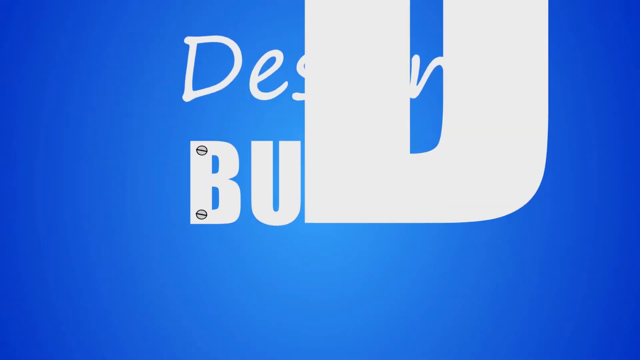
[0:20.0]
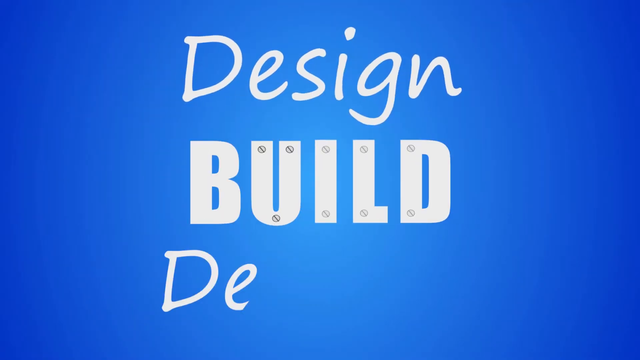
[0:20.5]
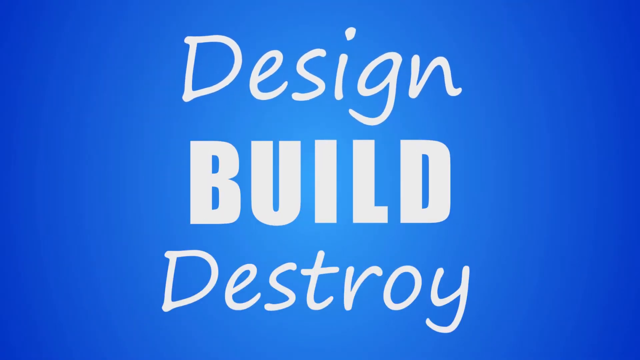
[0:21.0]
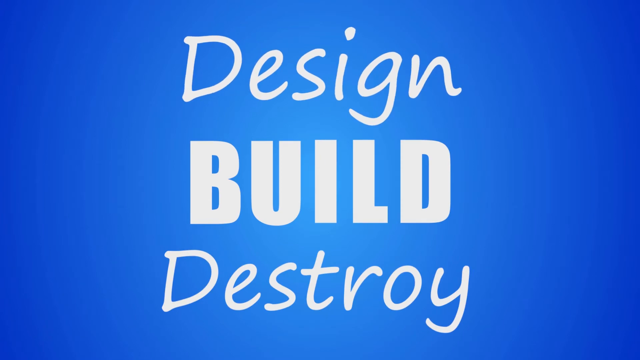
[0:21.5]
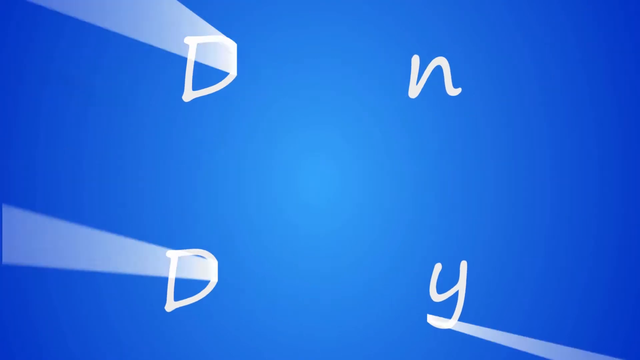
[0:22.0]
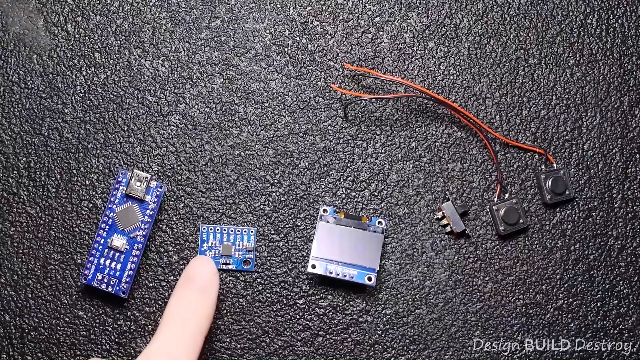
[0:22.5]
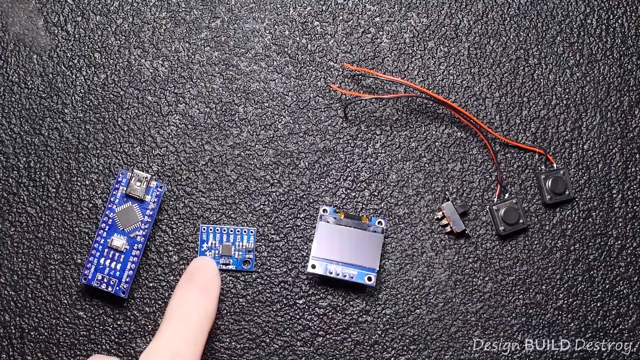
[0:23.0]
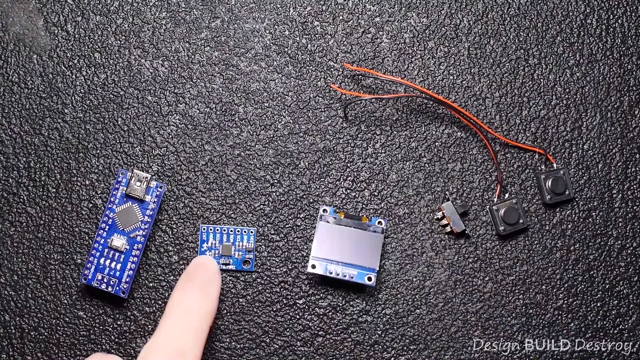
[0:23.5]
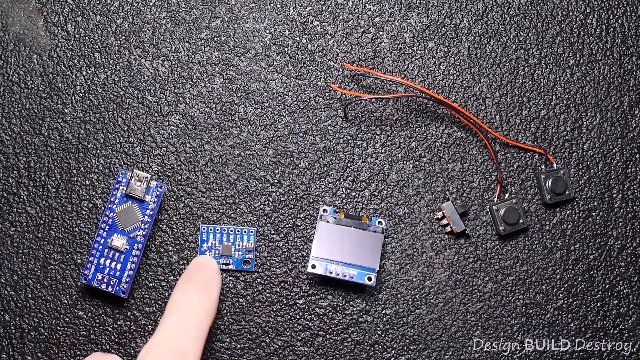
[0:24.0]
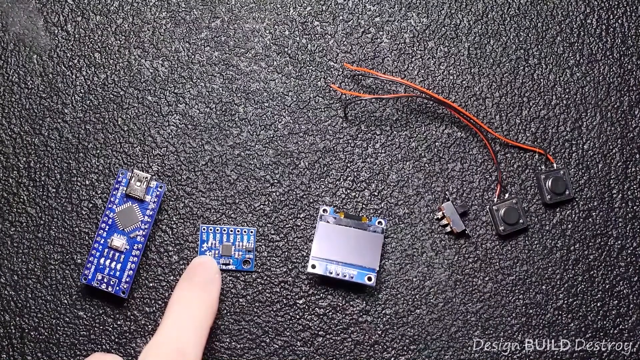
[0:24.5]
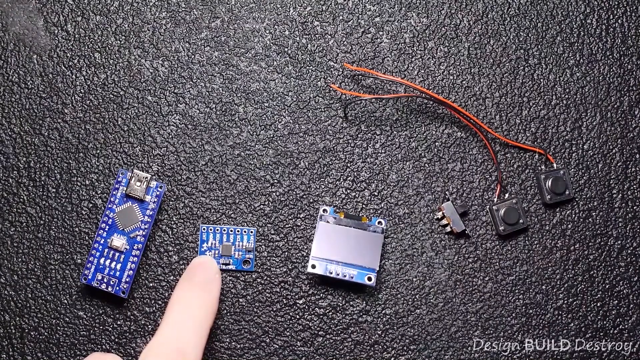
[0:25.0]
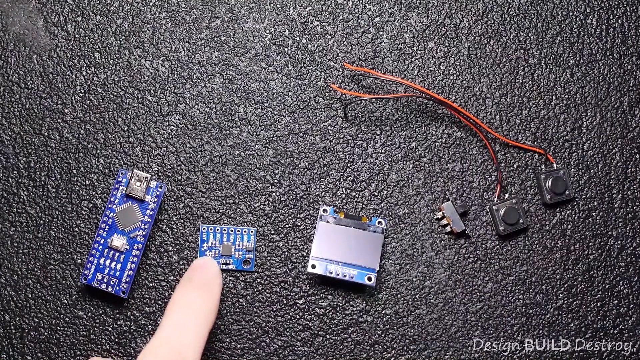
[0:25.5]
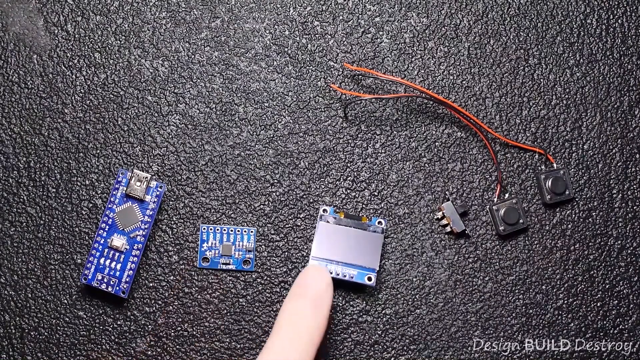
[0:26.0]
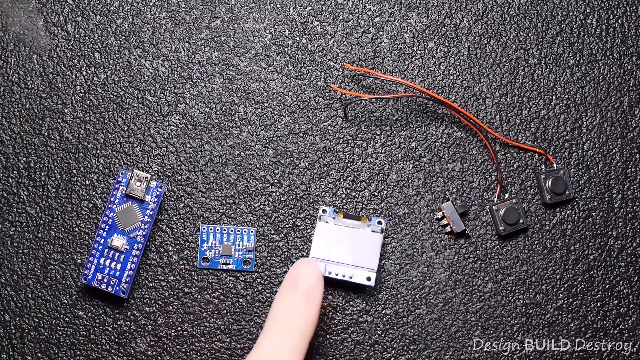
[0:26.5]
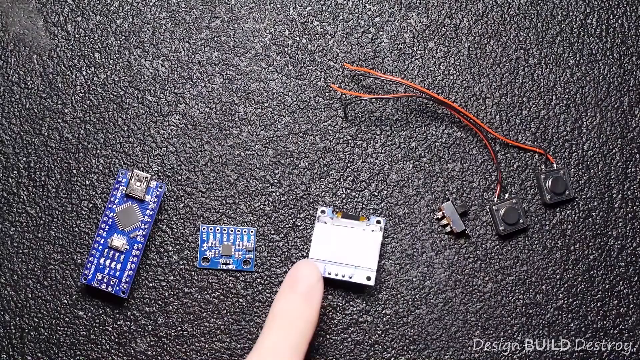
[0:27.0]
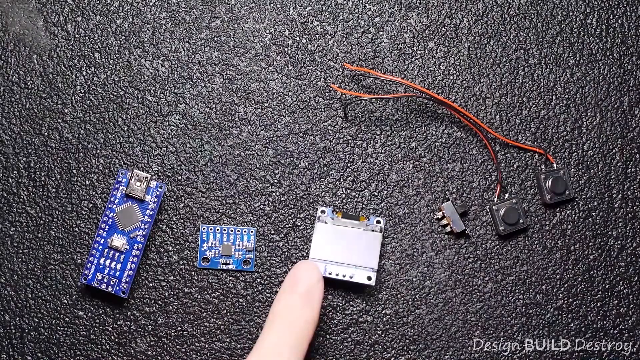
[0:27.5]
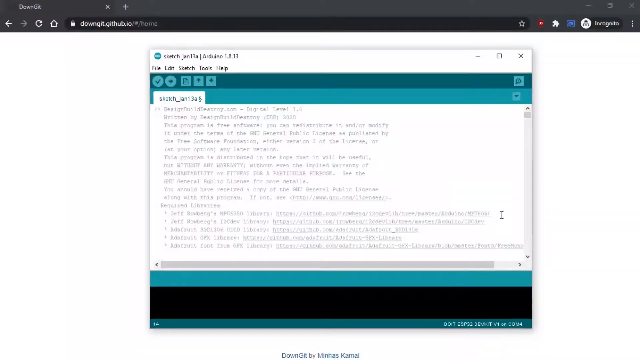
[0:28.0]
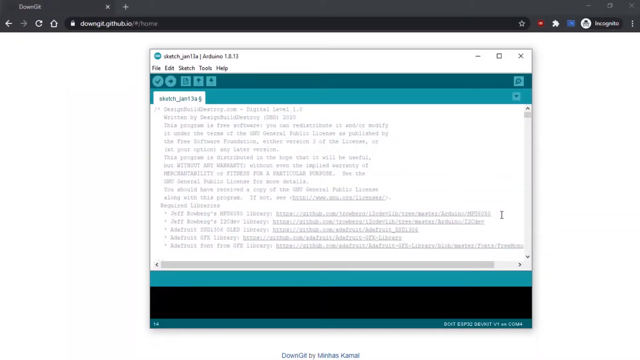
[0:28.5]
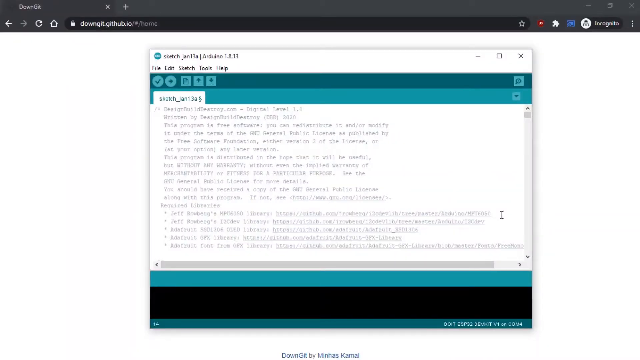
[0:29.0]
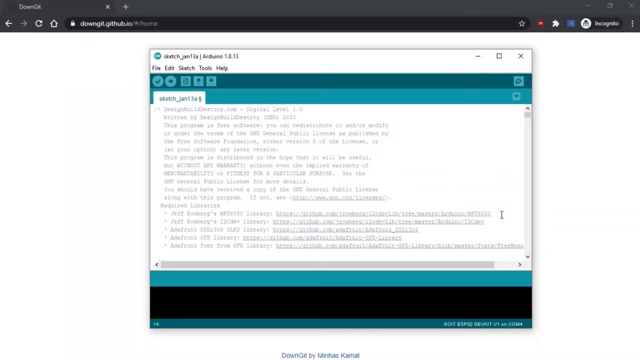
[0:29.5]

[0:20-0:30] An intro-style presentation screen with a blue background appears, and words appear on it one by one in white text: first "design", then "build" below it, then "destroy" below that. The intro screen disappears, giving way to an aerial view of a desk or table with some items on it. The items are various pieces of equipment that look like parts of an Arduino board or Raspberry Pi; there are four in total, and someone points at the individual items with their index finger. The screen then transitions to an internet browser with a tab open for the github.io website, and the Arduino sketch file open in a smaller window overlaying it.